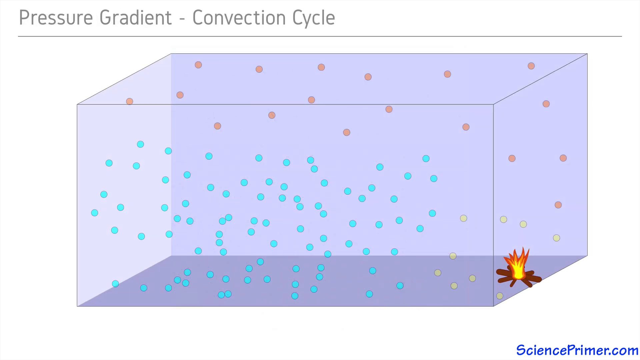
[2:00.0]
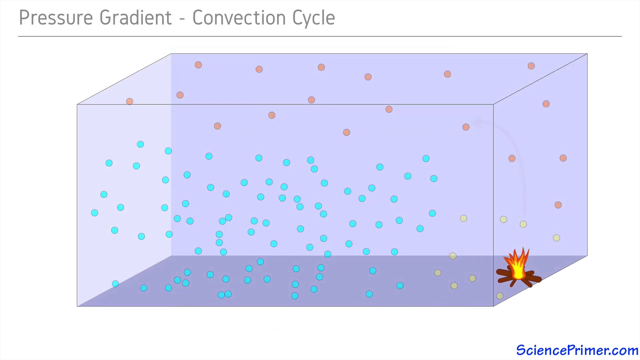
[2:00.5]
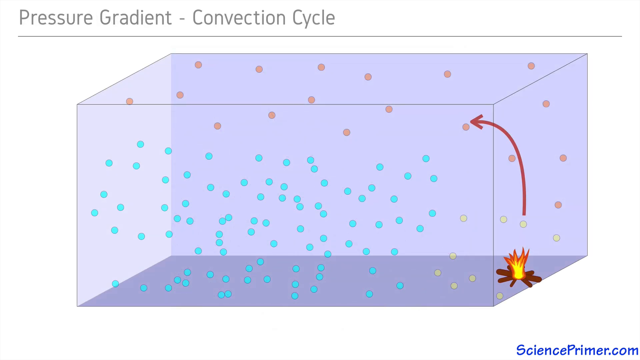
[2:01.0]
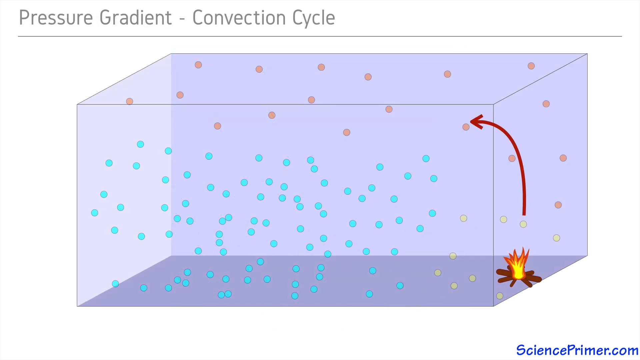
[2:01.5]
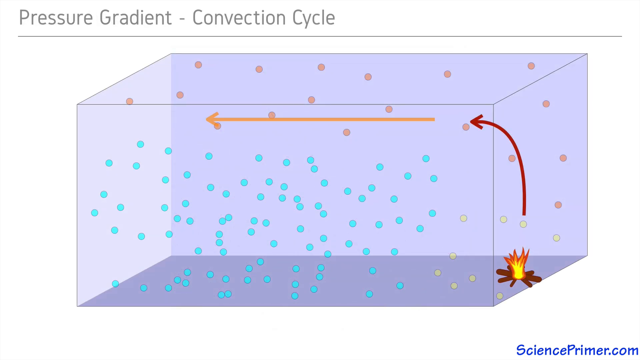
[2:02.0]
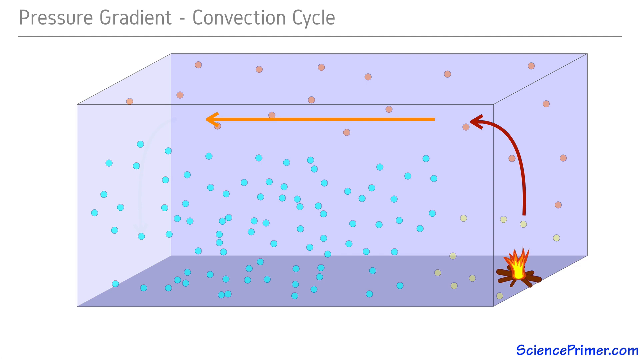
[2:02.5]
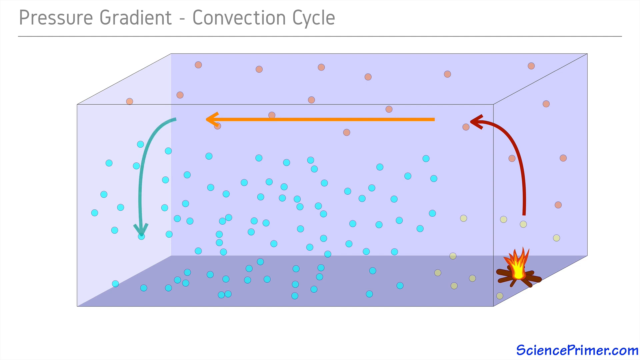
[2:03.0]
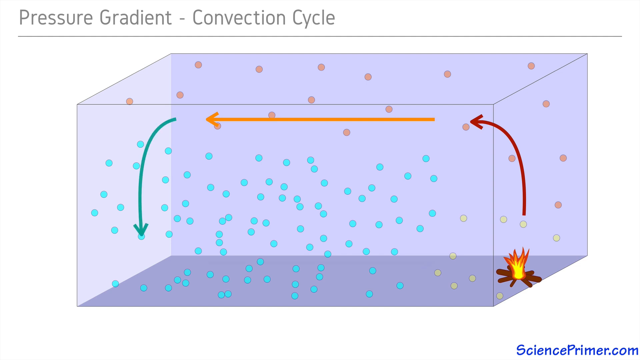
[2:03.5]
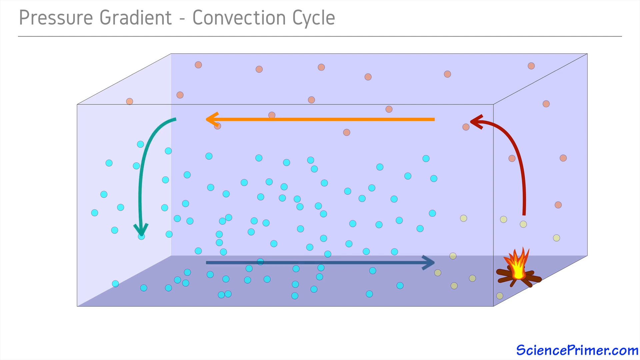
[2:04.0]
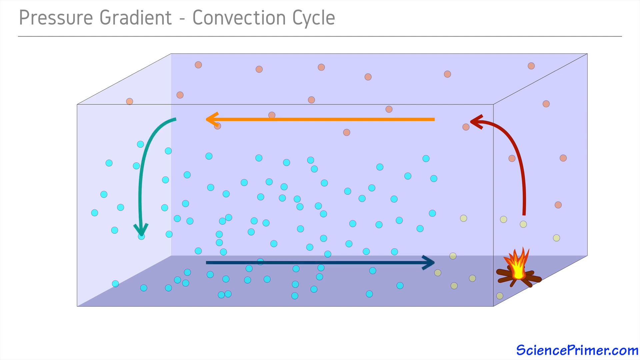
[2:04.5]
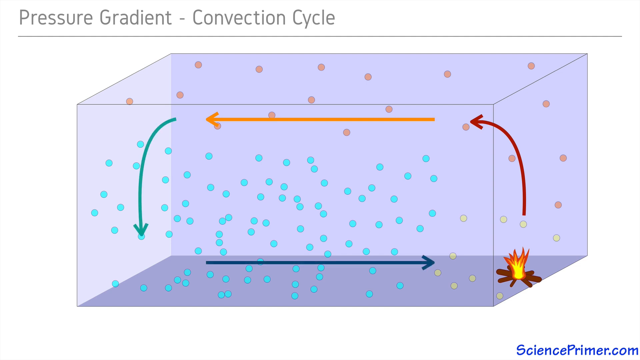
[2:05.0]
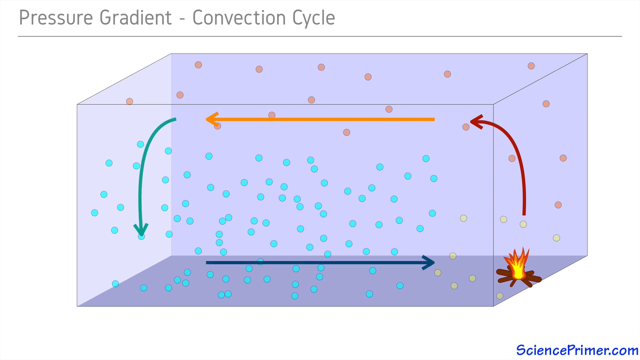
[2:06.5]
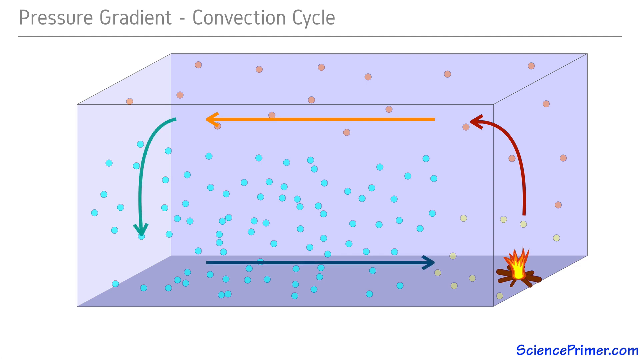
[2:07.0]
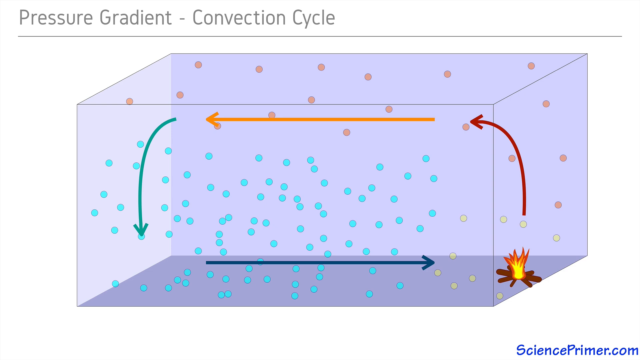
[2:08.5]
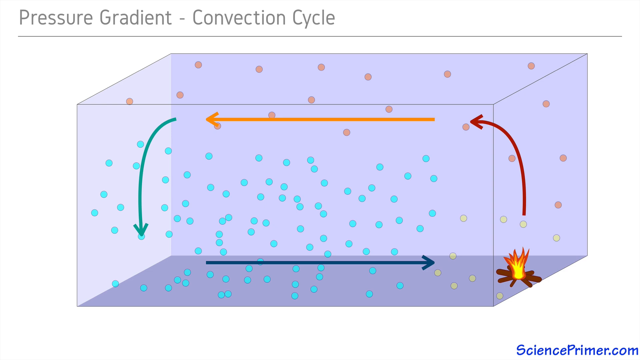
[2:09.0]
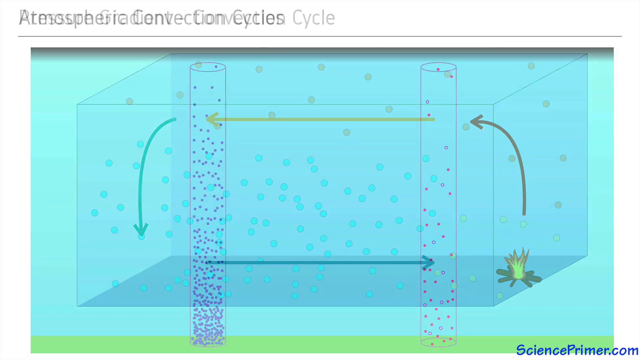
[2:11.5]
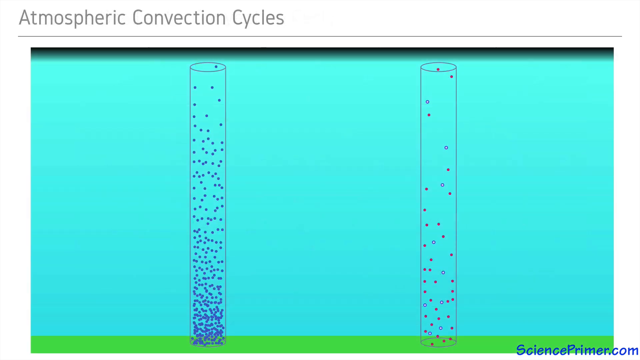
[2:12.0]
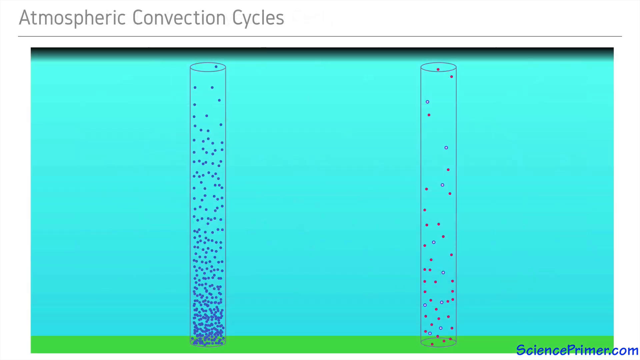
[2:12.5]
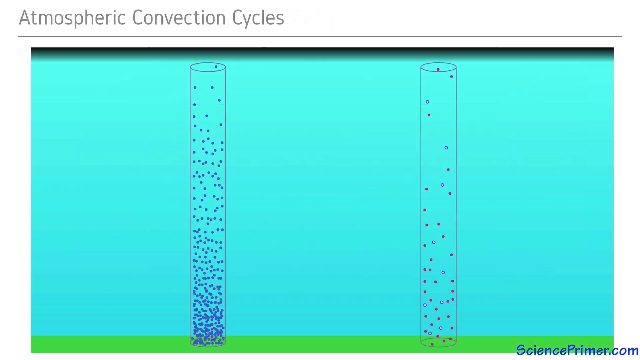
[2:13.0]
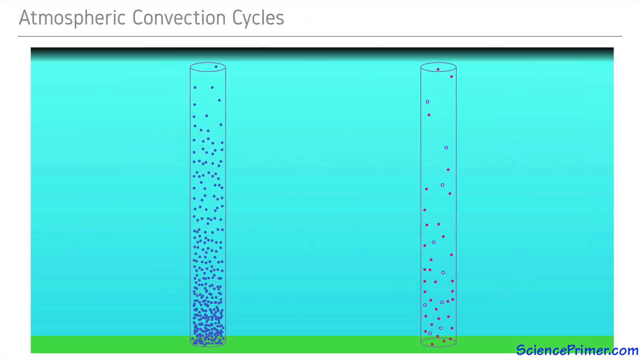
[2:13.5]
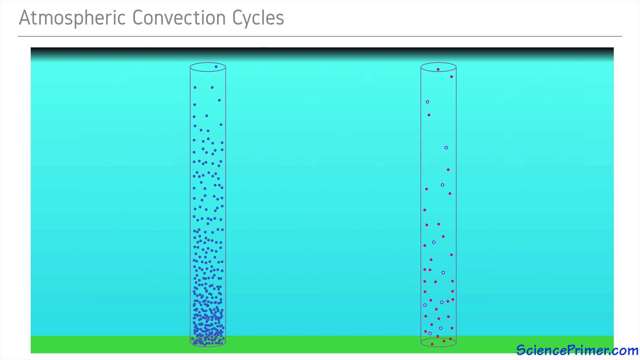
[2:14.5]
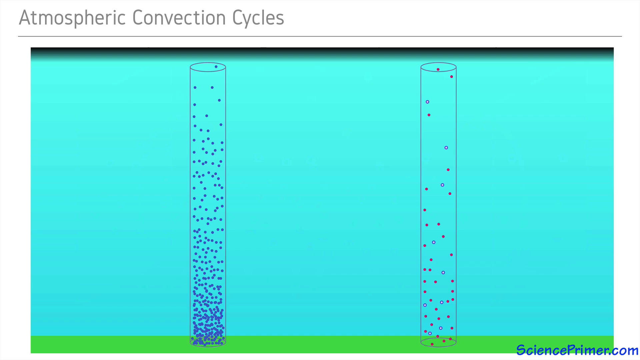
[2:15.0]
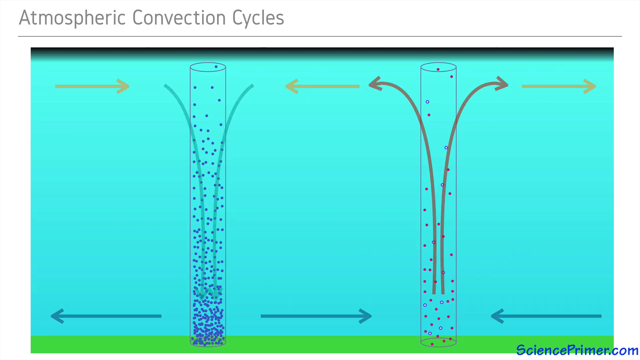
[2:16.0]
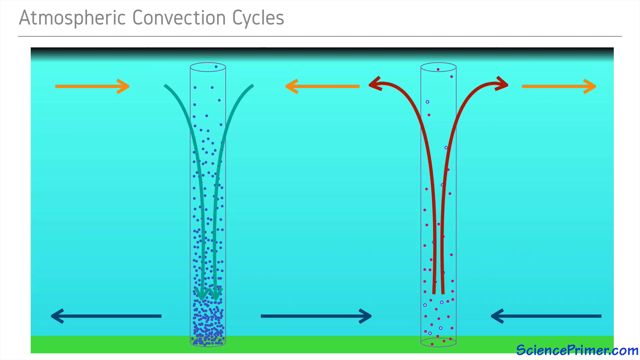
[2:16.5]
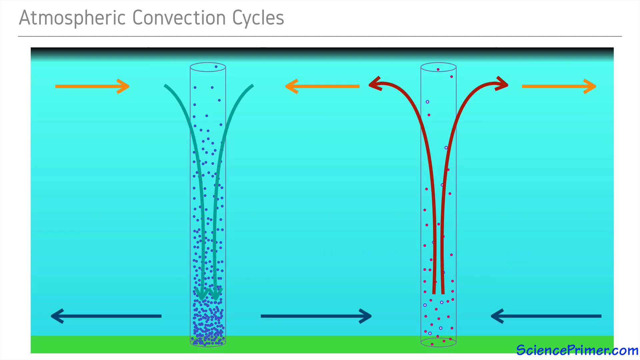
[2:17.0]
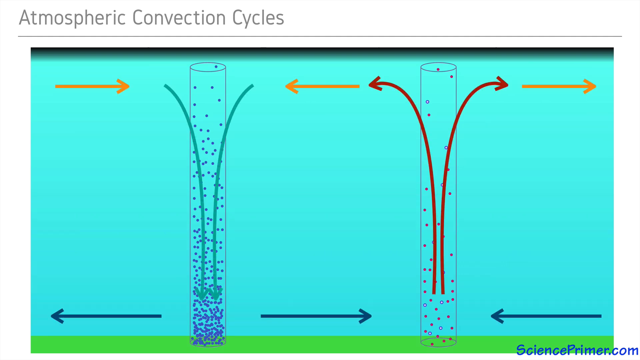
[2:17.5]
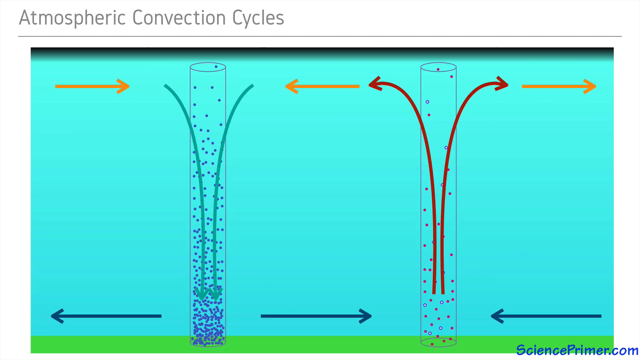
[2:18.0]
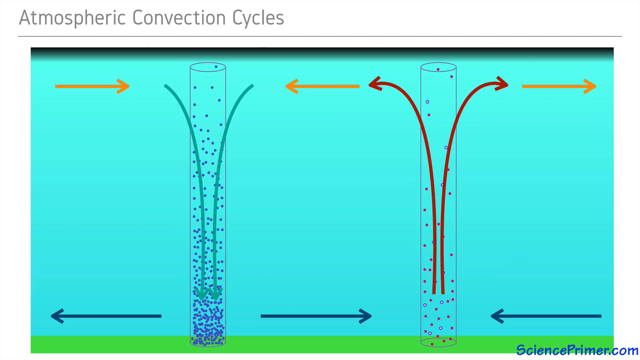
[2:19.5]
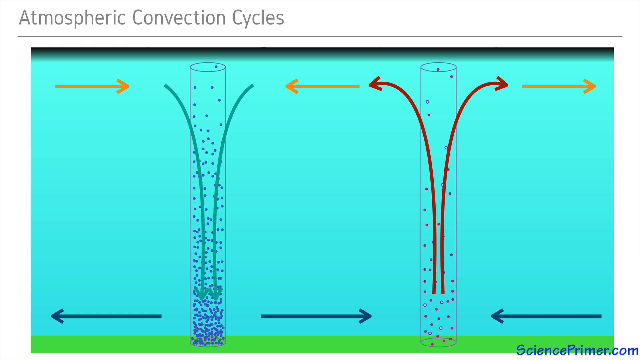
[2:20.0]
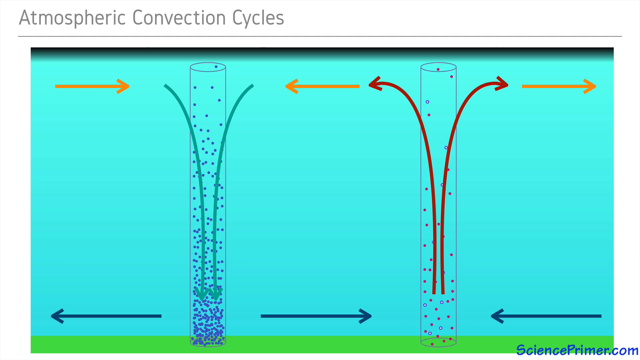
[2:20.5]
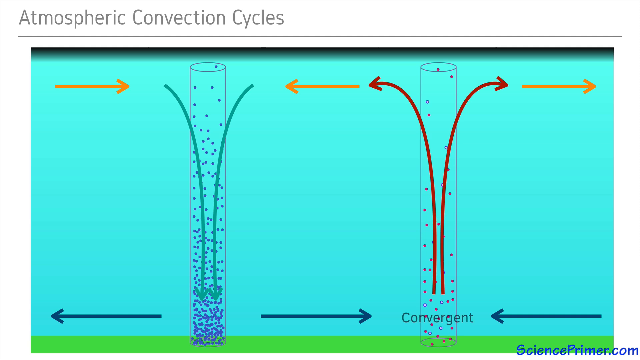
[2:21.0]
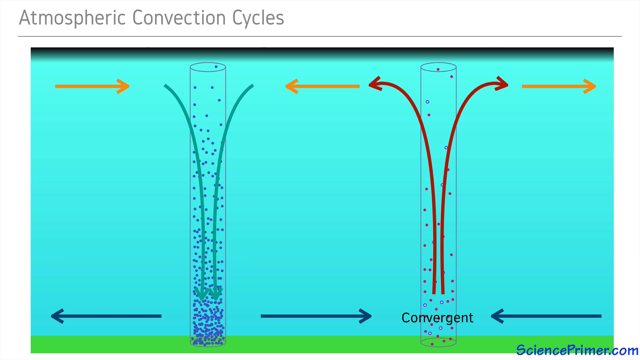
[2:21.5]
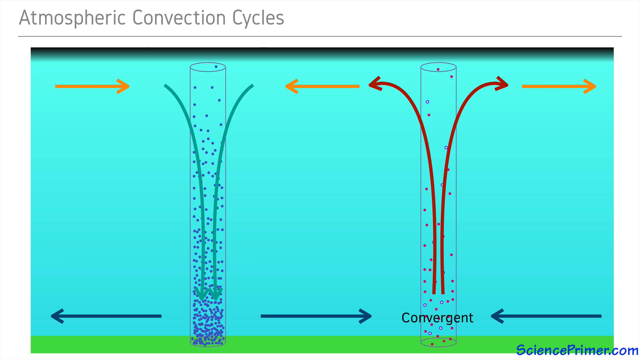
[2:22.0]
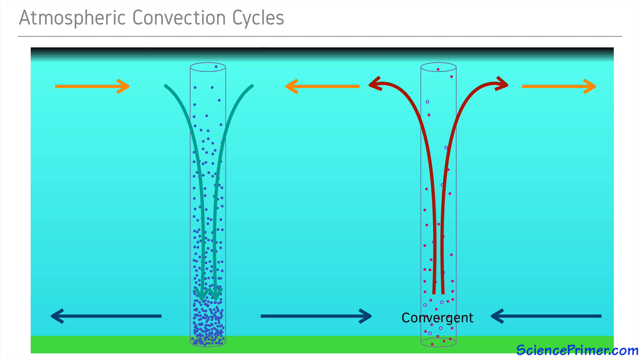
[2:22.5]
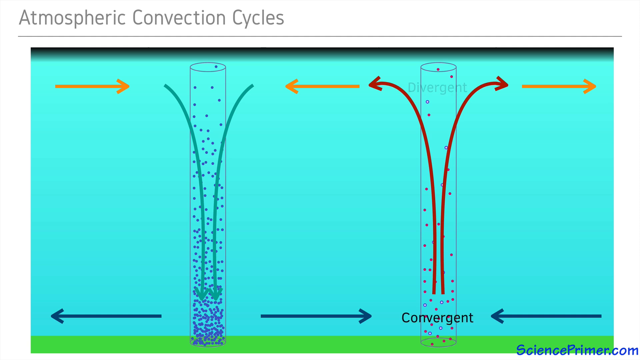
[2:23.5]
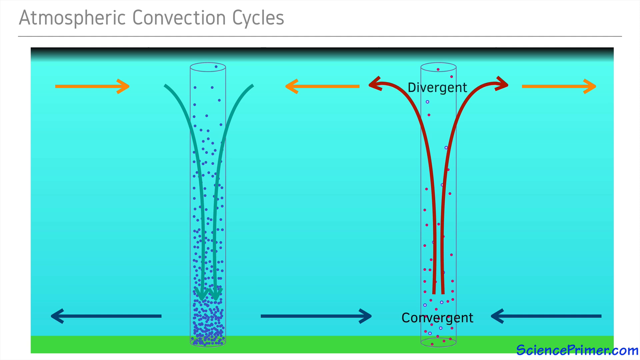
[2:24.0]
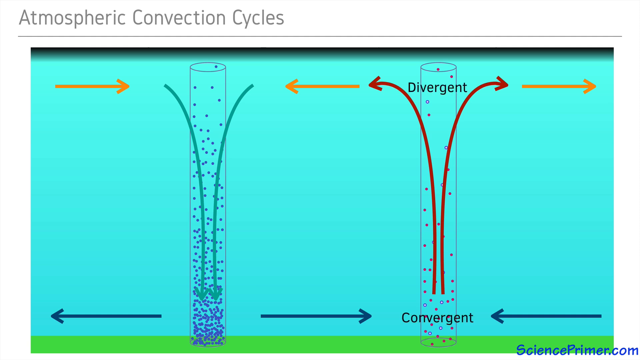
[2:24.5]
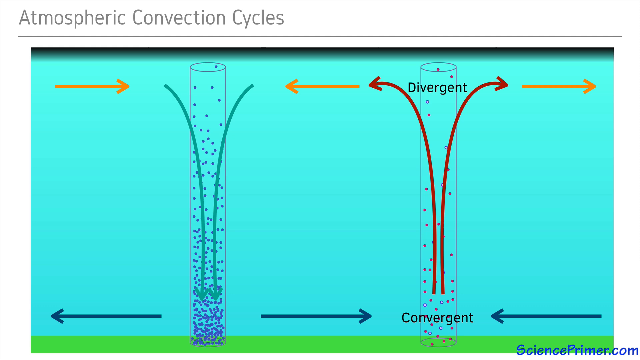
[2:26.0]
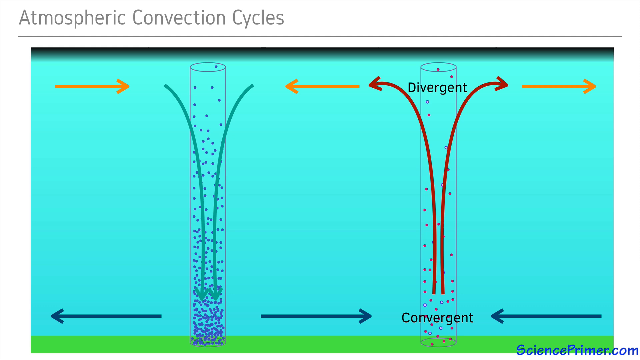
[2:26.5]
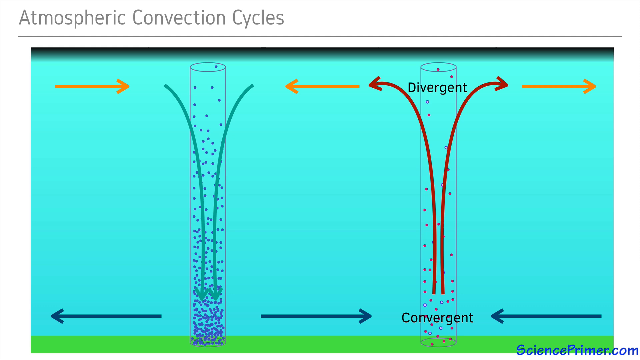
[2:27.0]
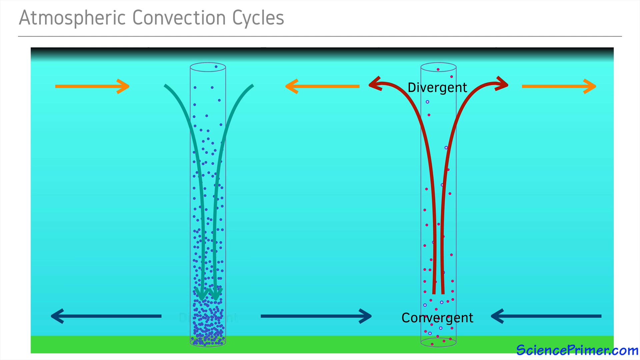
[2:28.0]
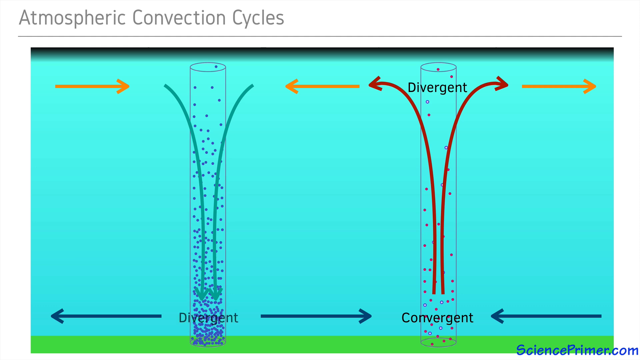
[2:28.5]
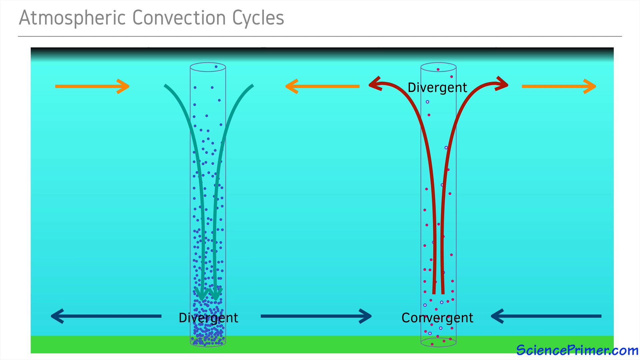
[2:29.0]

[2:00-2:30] A red curved arrow appears above the campfire in the bottom right corner, curving to the left and pointing to the upper area. A long orange arrow then appears in the upper center area, pointing to the left. Right after it comes a light blue or teal arrow on the left side, pointing downward. A fourth arrow, dark blue and very long, appears on the bottom, pointing horizontally to the right toward the campfire, making four arrows in total: red, orange, light blue or teal, and blue. Next, two standing outlined cylinders appear, one on the left and one on the right, with green, what looks like grass, on the bottom. Two arrows flow up and outward to the side from the right cylinder, while on the left cylinder two arrows come from the top sides and point downward down the middle. The word "CONVERGENT" appears on the bottom of the right cylinder, and then the word "DIVERGENT" appears on top of the right cylinder.